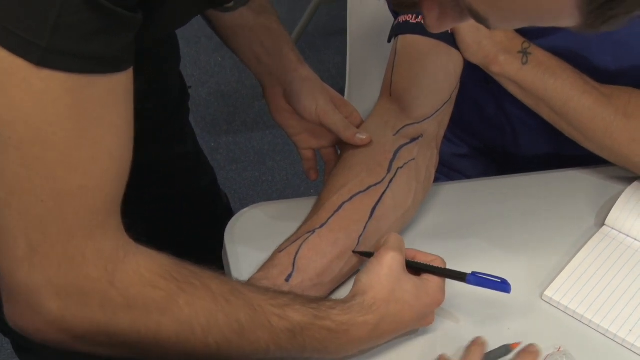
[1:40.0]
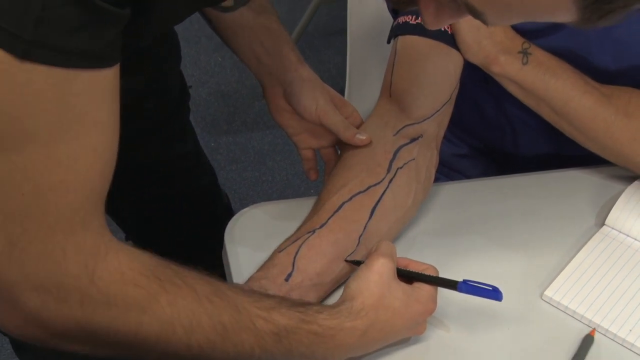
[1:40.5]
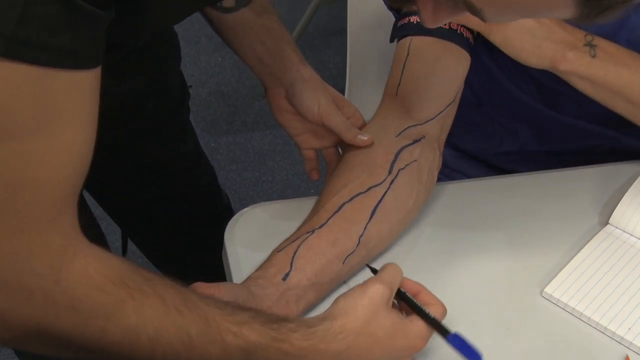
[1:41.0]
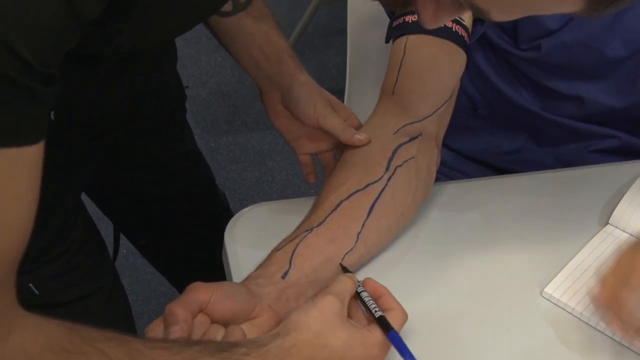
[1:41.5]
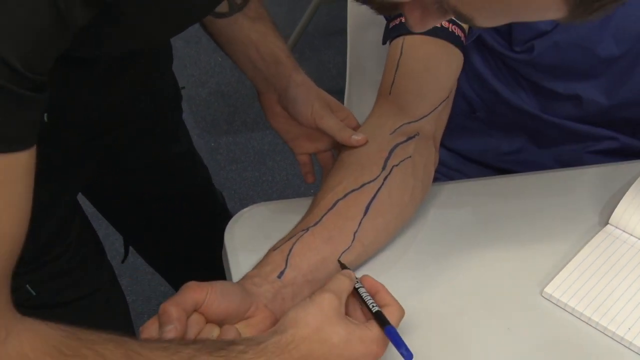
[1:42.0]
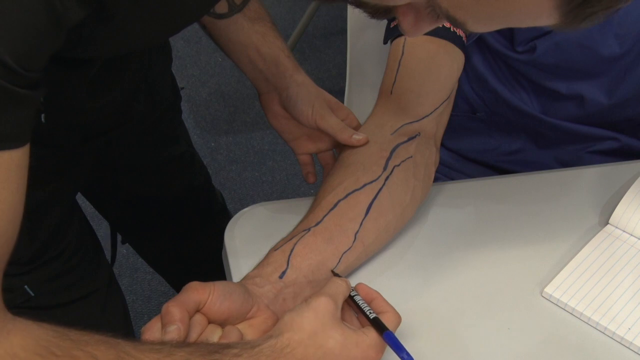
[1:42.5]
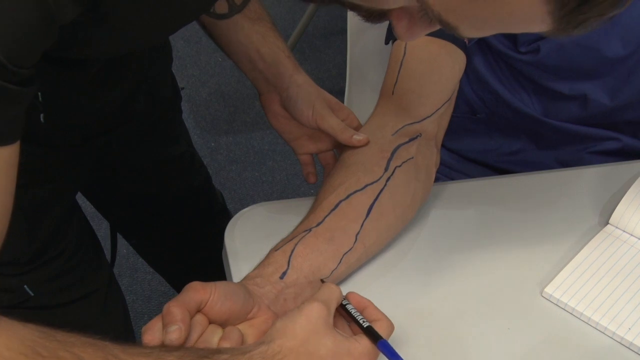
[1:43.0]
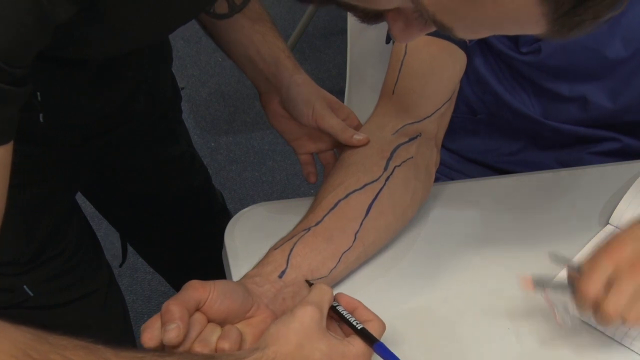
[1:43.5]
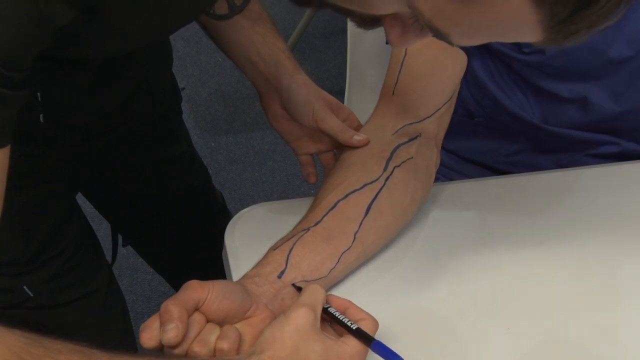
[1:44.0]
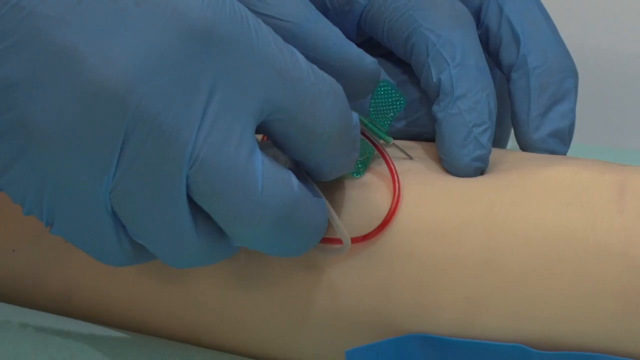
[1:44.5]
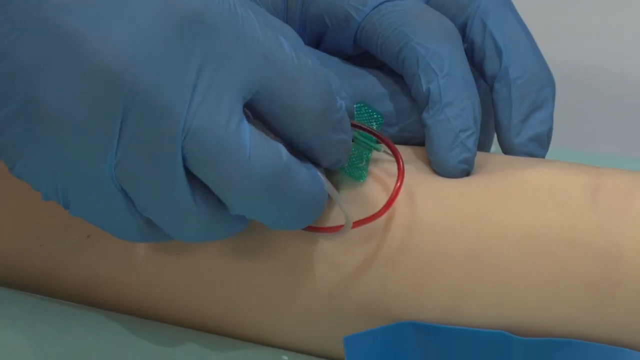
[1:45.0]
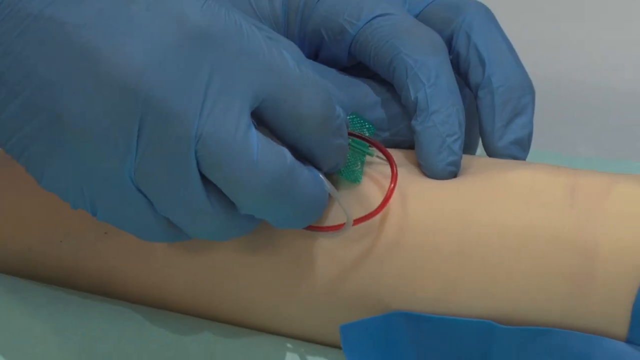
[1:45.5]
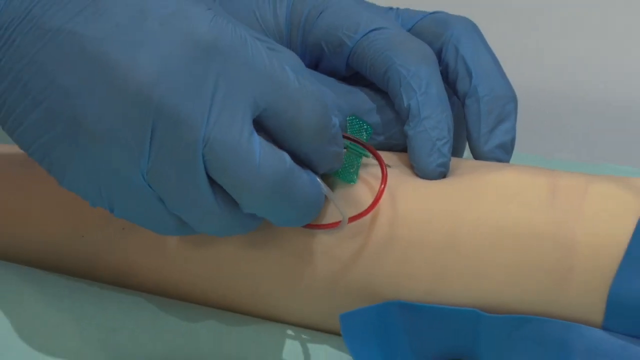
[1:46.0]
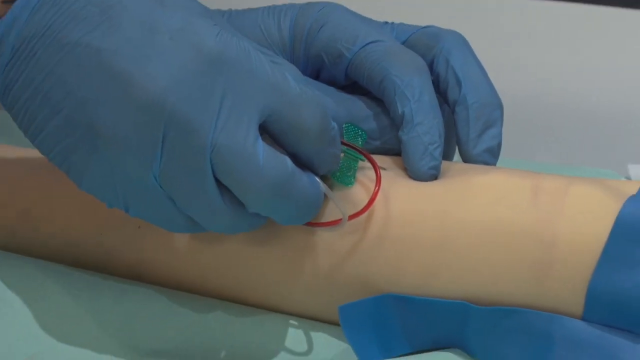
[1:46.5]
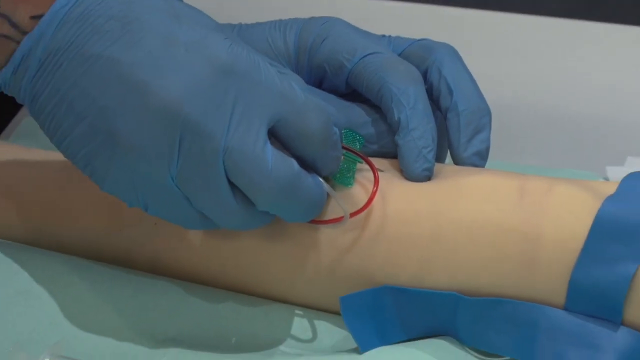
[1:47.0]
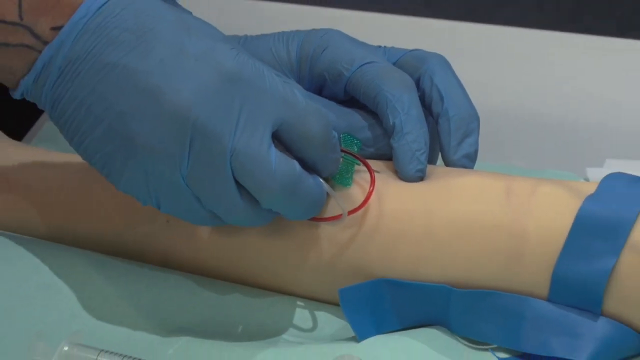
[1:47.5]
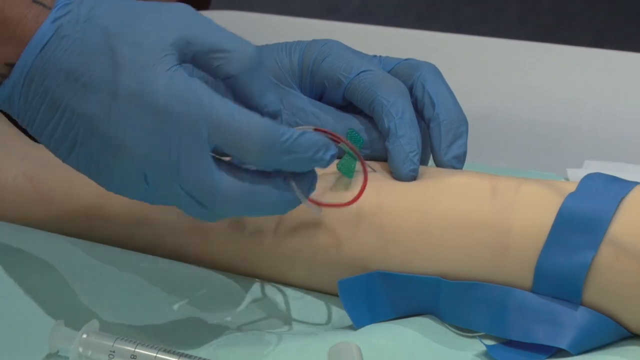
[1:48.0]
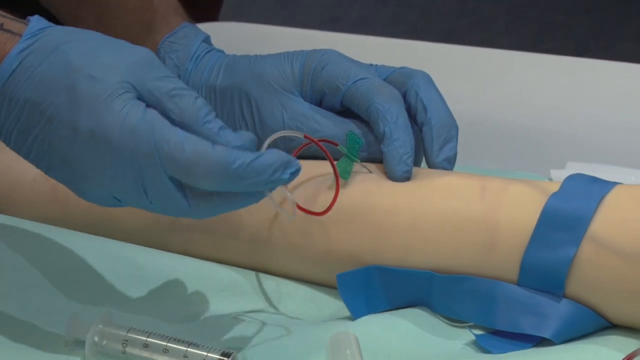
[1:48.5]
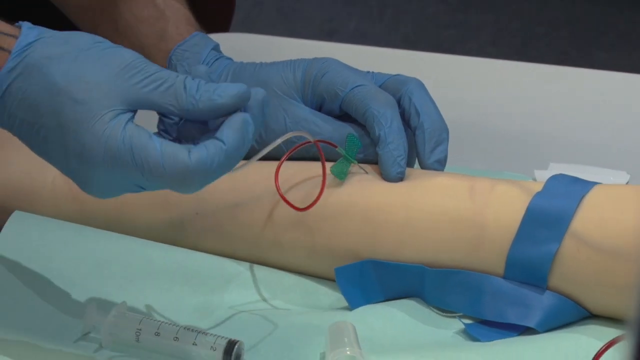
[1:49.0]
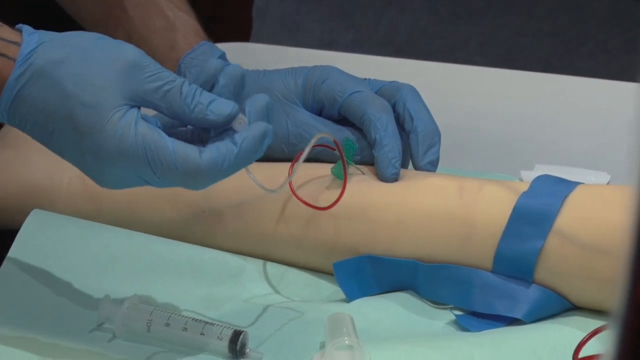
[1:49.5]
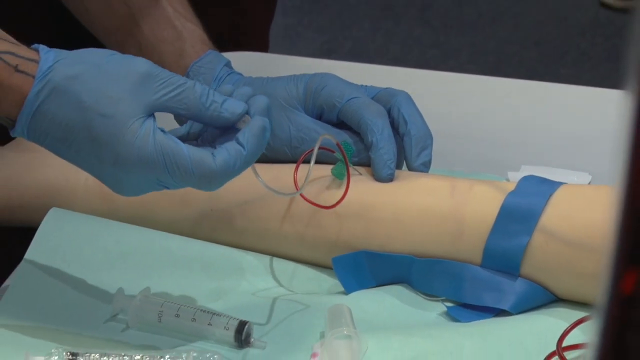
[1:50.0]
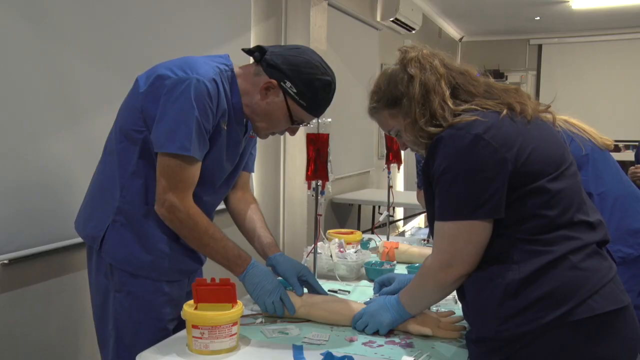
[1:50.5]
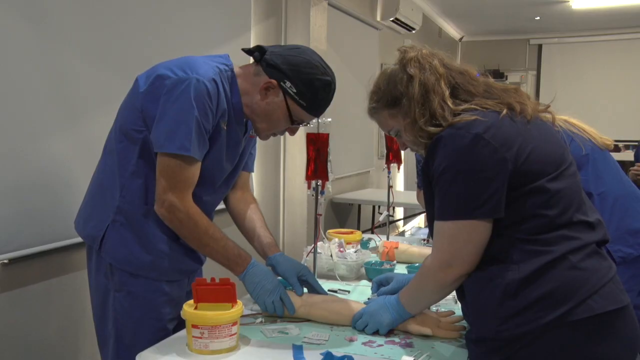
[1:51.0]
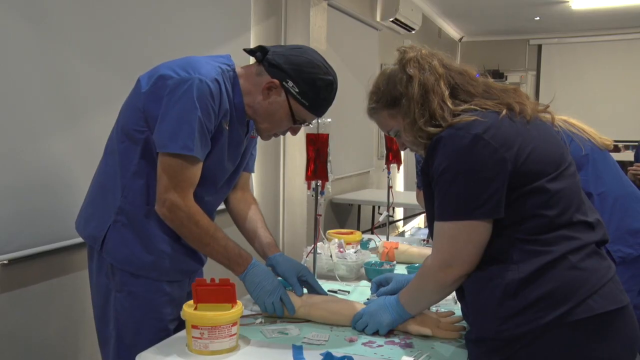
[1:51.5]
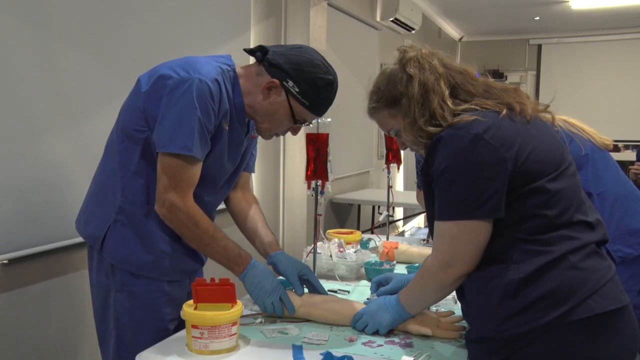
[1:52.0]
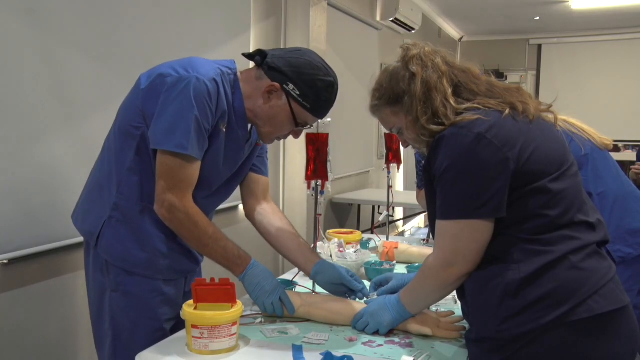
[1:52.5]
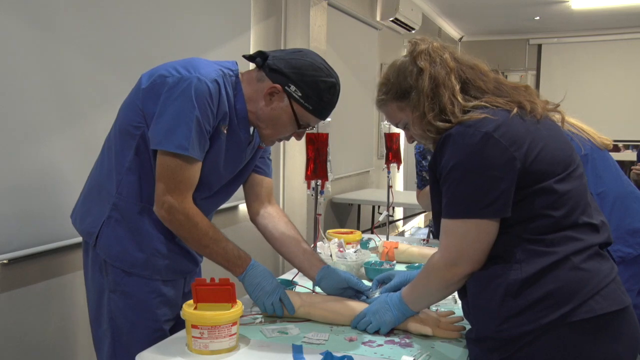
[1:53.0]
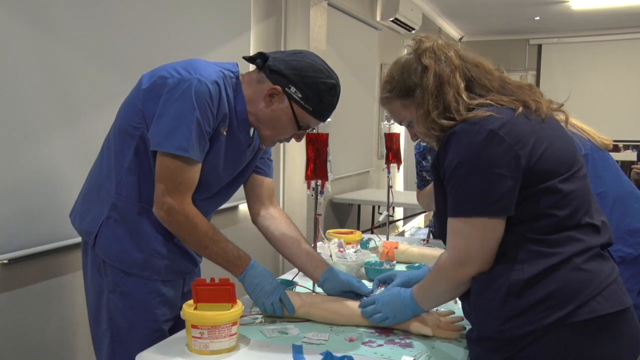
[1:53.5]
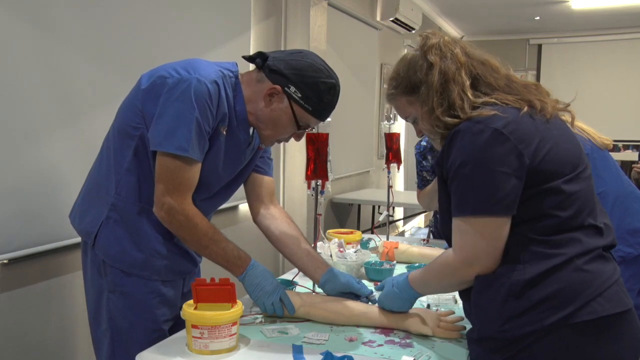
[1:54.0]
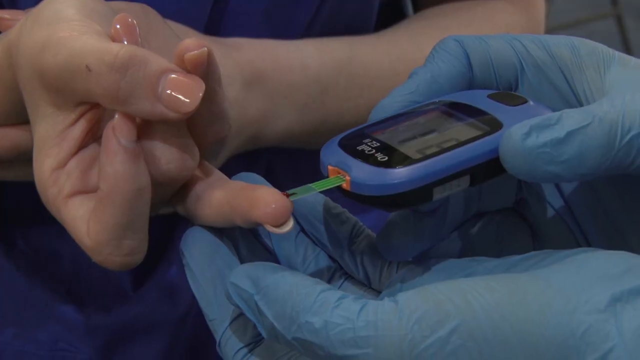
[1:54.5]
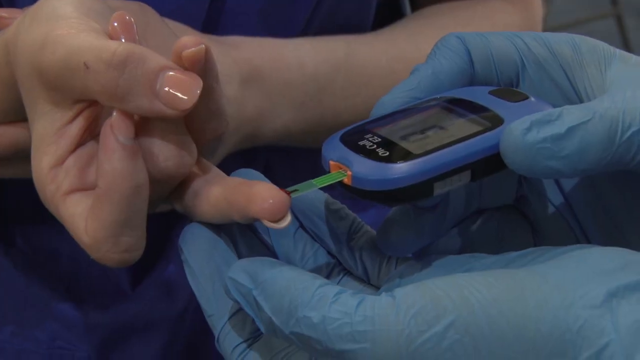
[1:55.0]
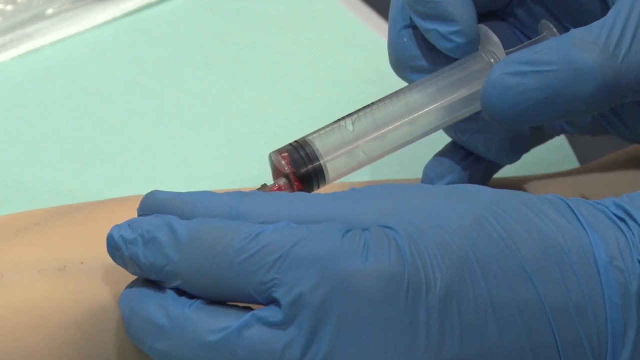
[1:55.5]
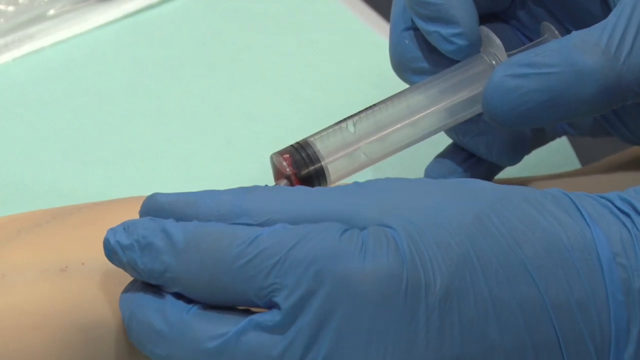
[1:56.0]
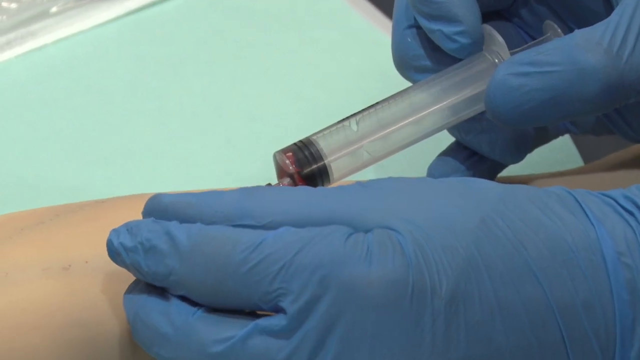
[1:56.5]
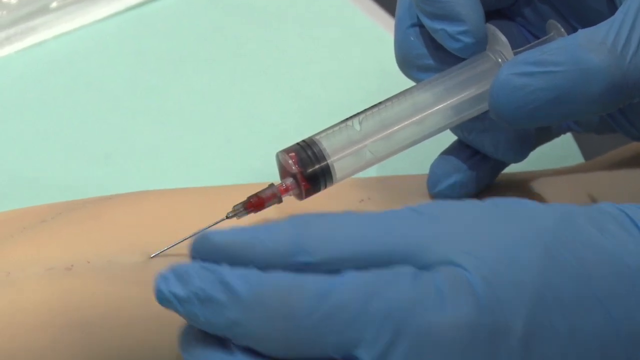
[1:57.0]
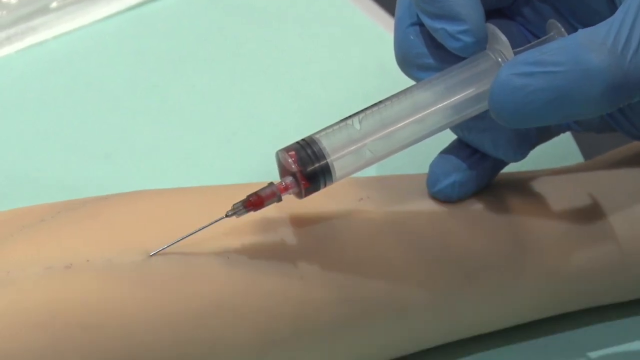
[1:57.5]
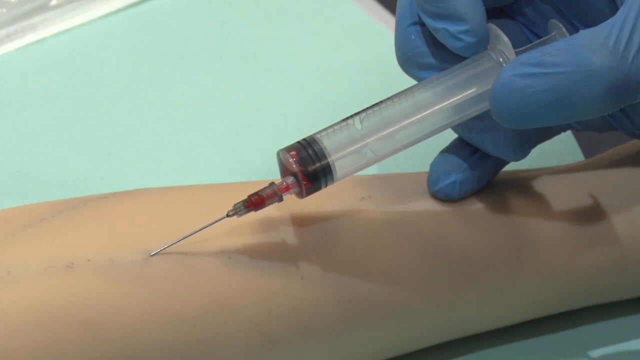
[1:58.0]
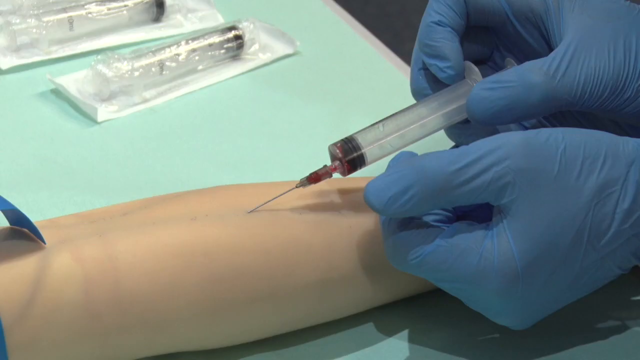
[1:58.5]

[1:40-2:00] In a close-up, a person has their arm laid out on a table while someone standing above them traces over the veins on the arm with a dark blue marker, so the veins show up as blue lines on the forearm. The person being drawn on pushes a piece of paper on the table away as the drawing continues. In another close-up, a person in blue gloves gives an injection into an arm; the needle is attached to a little rectangular green plastic piece, with a long thin clear tube at the end that looks like it has blood running through it. They appear to put the injection in and then move their fingers a little way down the tube. Next, a student works at a table with an instructor; both hold a model dummy arm while the student gives the arm an injection, and both wear blue latex gloves and blue hospital scrubs. The student seems possibly to be having difficulty, as the teacher takes over and grabs the needle. A close-up shows what looks like a blue round device with a screen showing the number "68"; from the bottom of the device, a flat, skinny green object touches the end of someone's finger as if taking a reading. Then a pair of blue-gloved hands holds a large syringe whose end pokes into the flesh of a forearm, simply holding it in place.